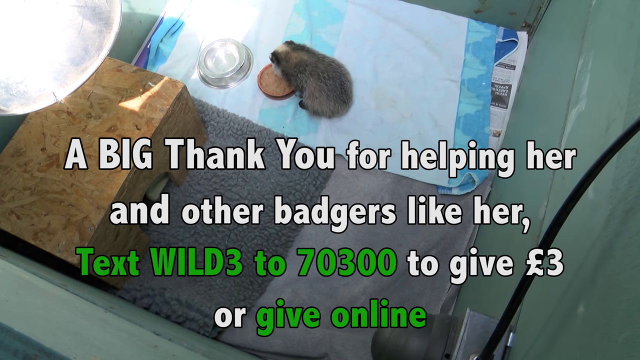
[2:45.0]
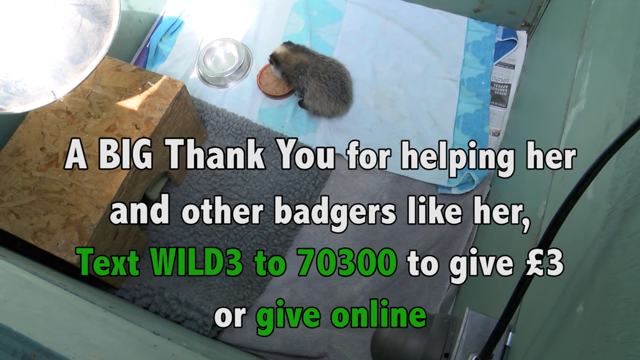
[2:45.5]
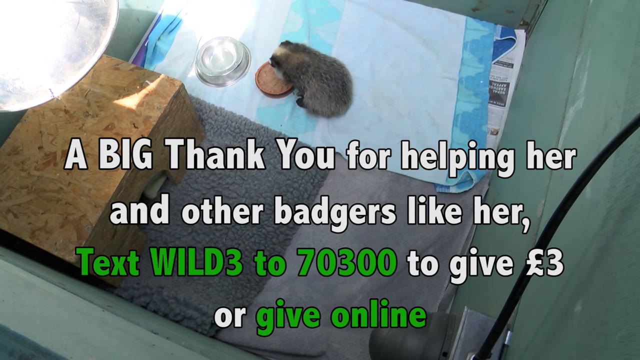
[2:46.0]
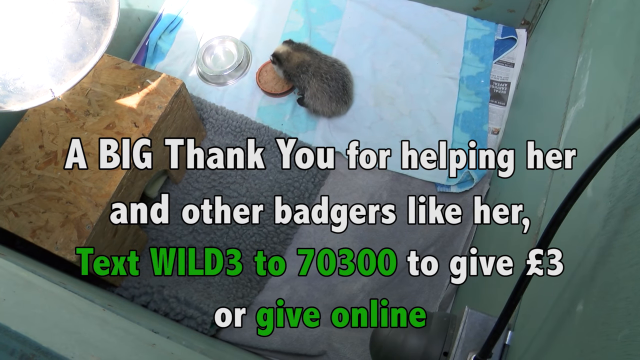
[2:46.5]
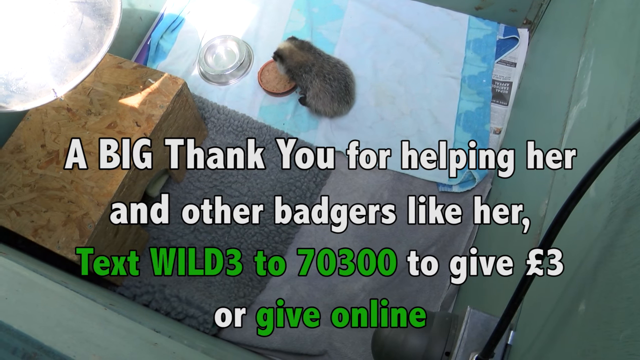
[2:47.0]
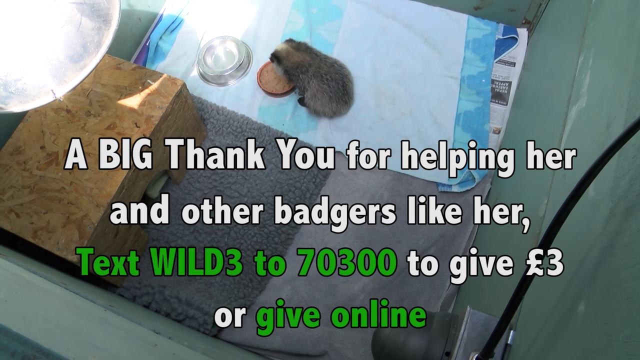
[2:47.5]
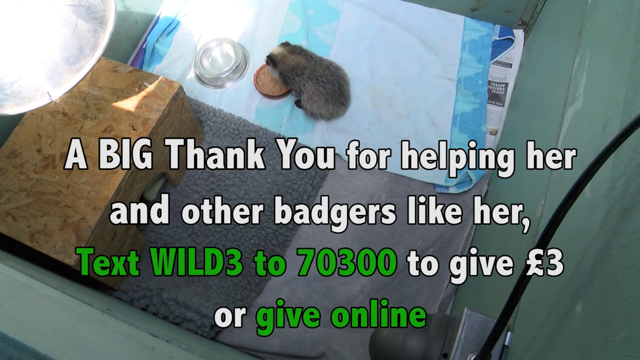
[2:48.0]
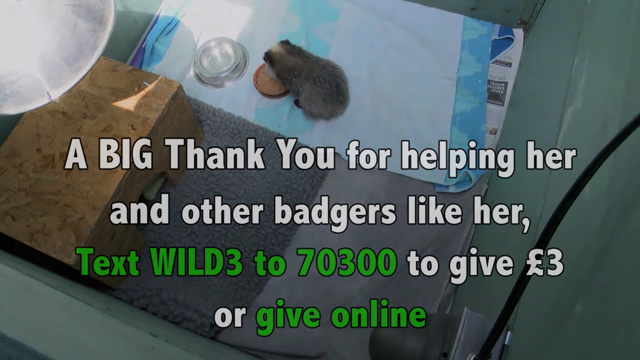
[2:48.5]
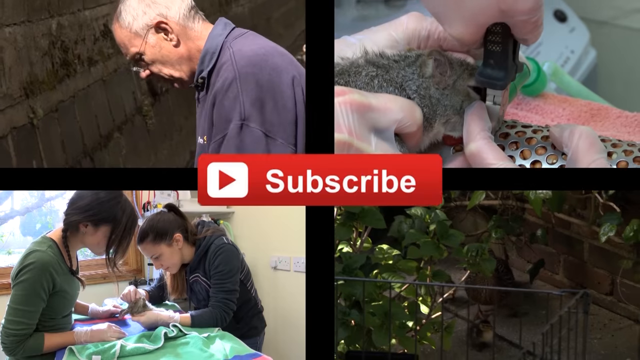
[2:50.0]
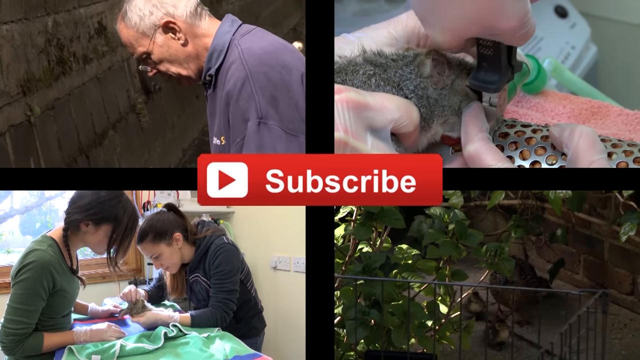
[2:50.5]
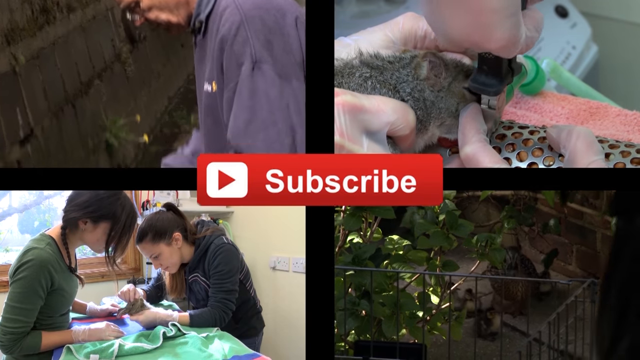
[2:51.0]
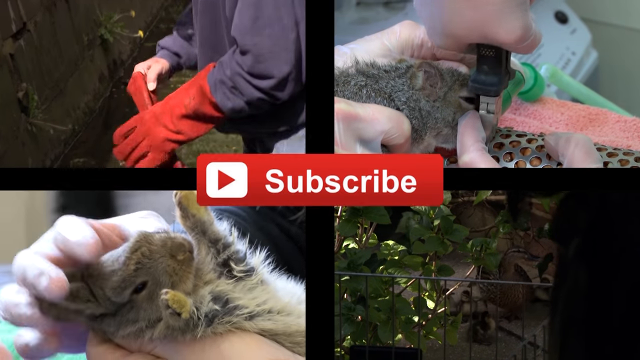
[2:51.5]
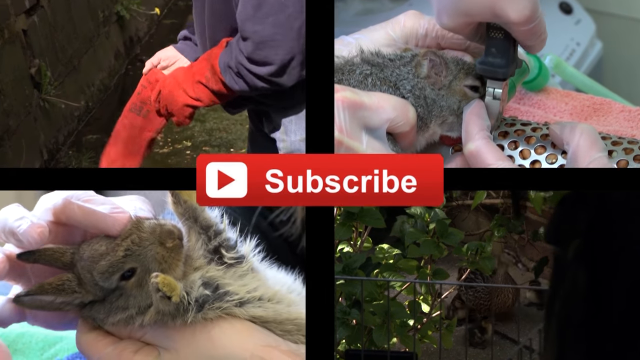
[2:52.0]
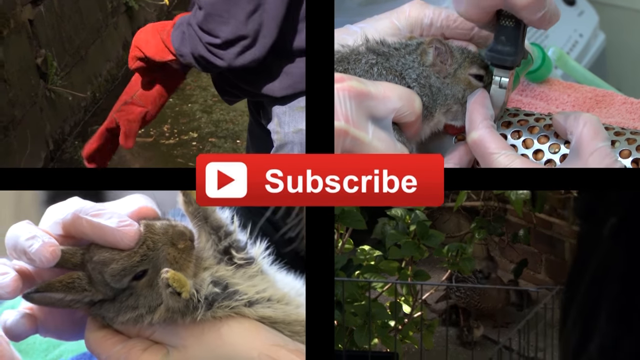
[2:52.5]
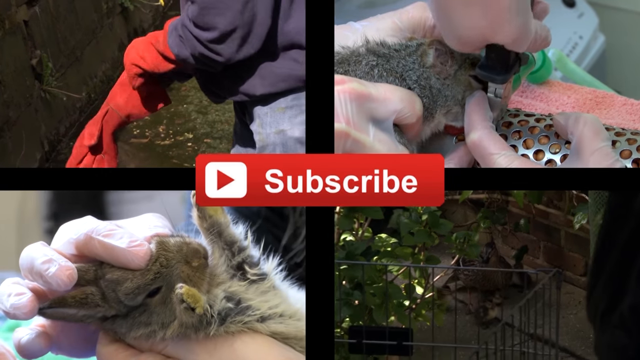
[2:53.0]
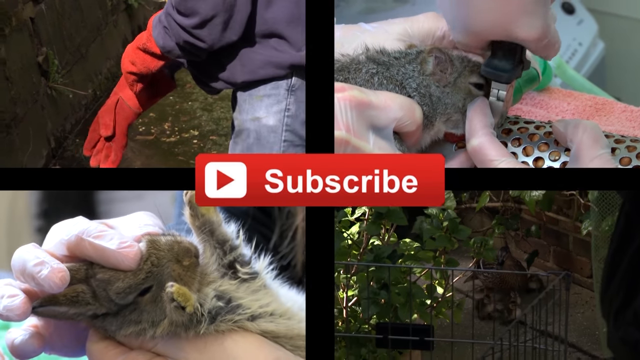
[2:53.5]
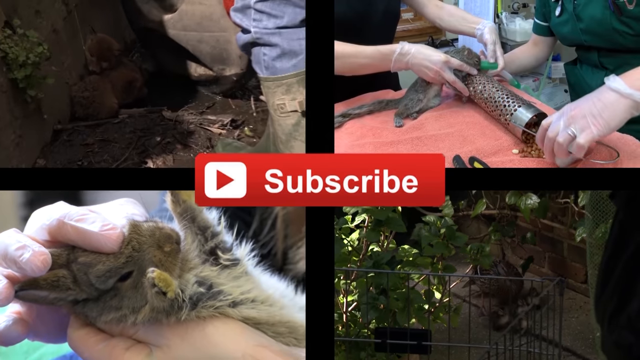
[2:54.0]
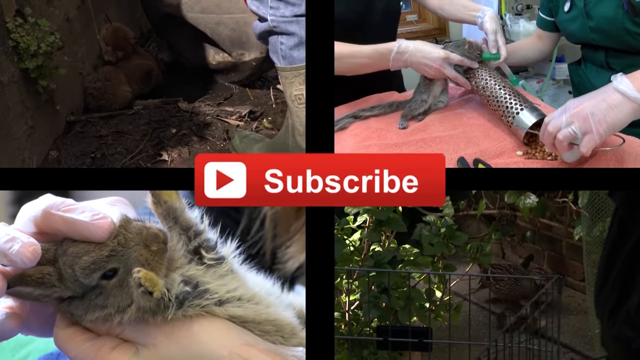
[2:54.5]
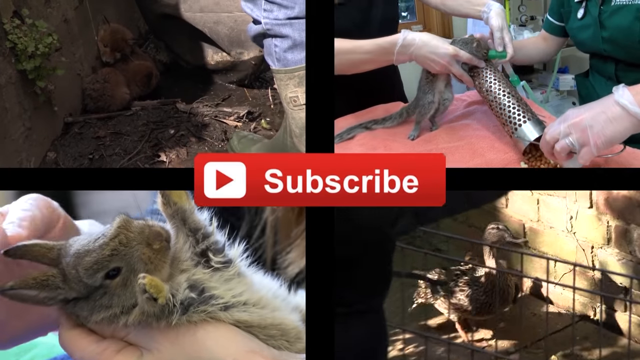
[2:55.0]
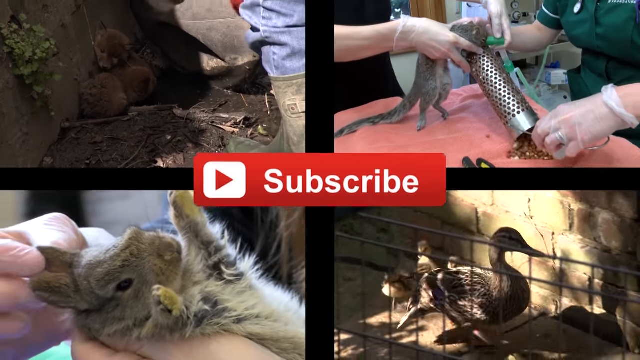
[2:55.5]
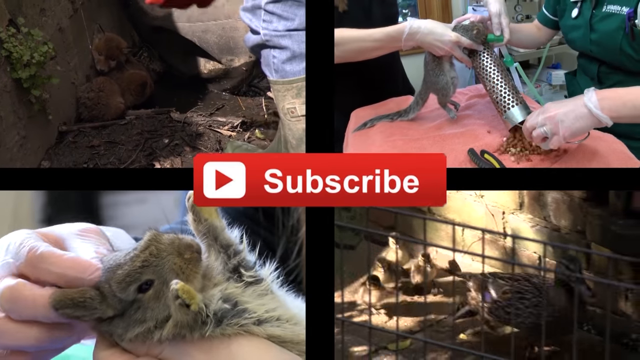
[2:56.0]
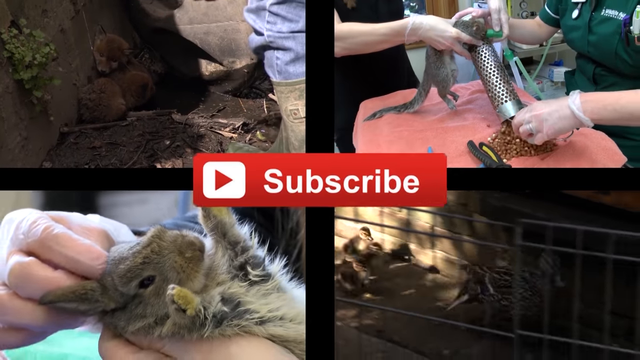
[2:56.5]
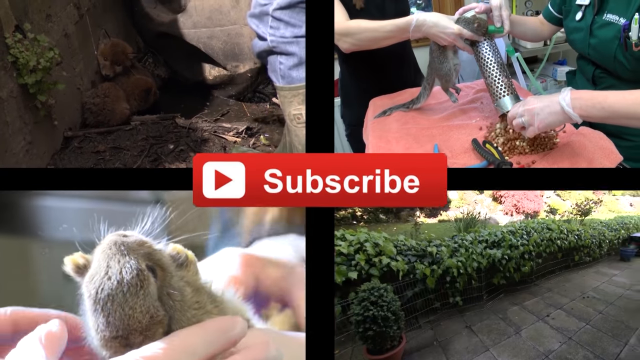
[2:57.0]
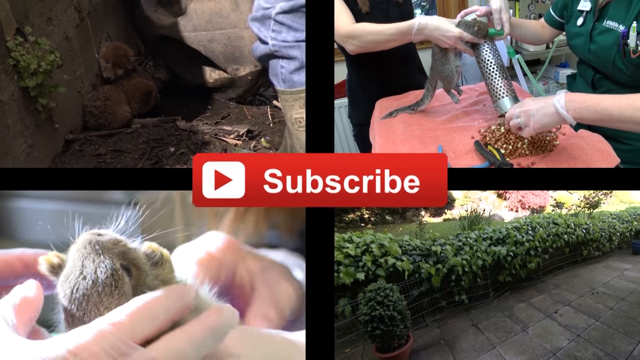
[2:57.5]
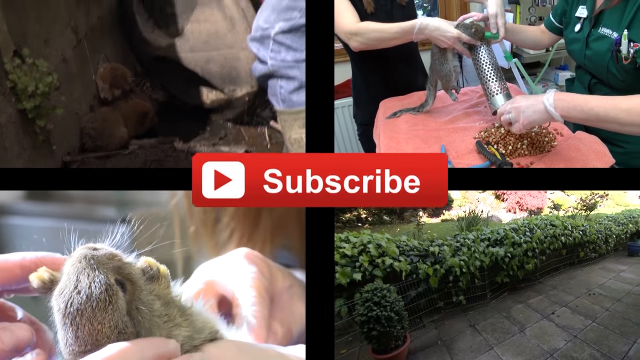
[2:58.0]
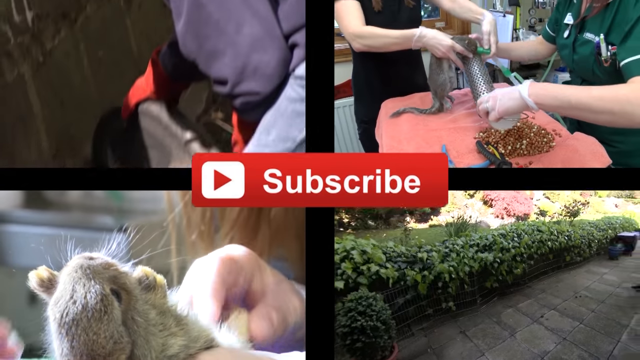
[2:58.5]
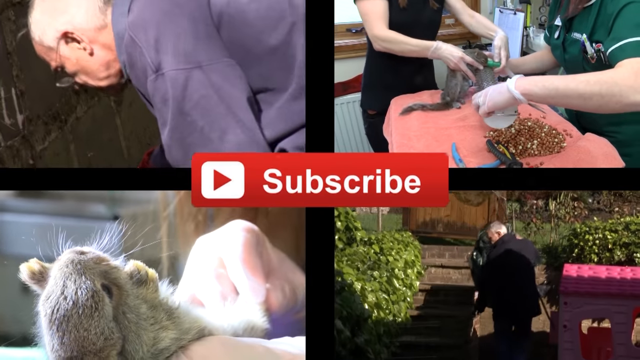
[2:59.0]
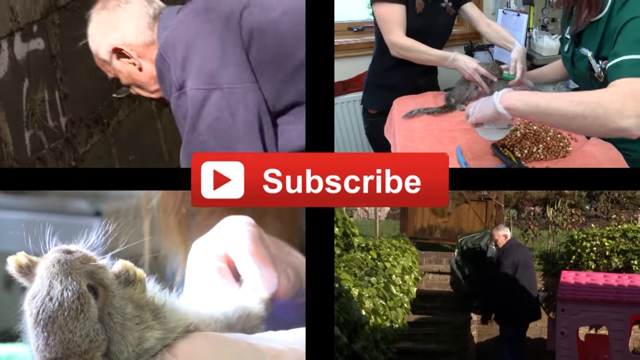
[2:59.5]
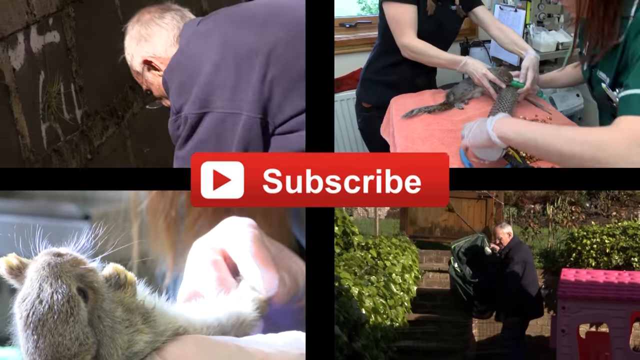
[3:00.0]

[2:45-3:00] The camera looks down on the badger in its enclosure, on a towel, eating from the bowl, with a silver bowl with water next to it. There is a wooden enclosure with a hole so the badger can go inside, maybe to sleep. The words on the screen read "a big thank you for helping her and other badgers like her text WILD3 to 70300 to give three pounds or give online." Then different scenes show different animals they are taking care of, and at the end a little logo, "WAF", appears on a green background.